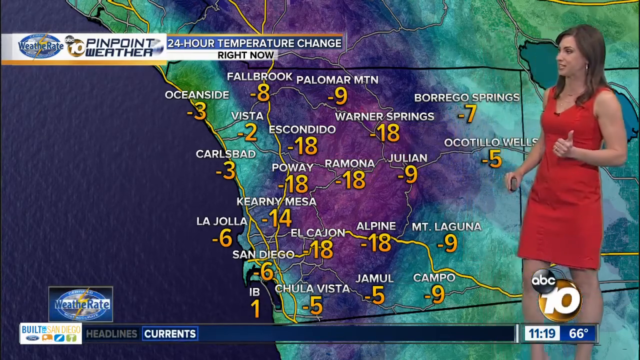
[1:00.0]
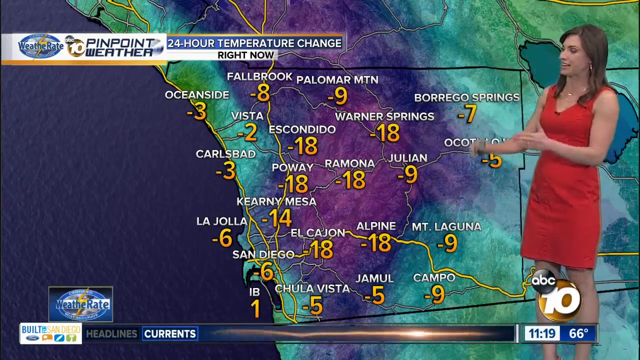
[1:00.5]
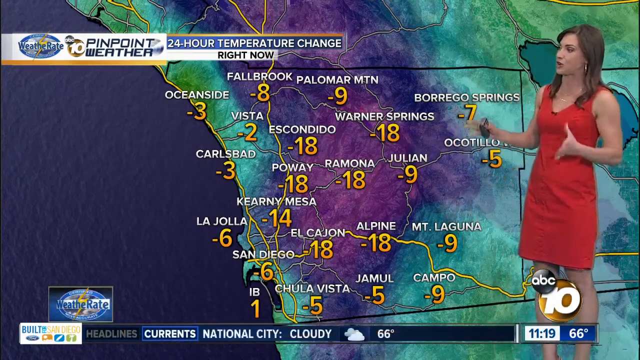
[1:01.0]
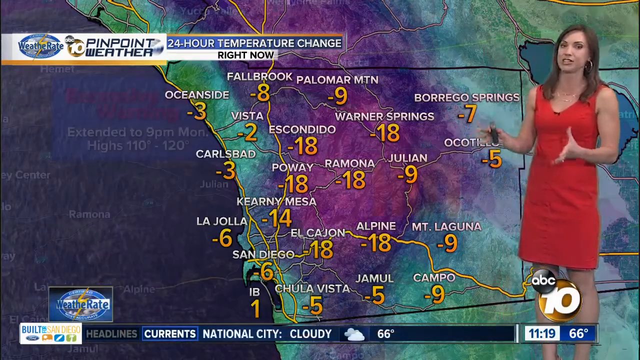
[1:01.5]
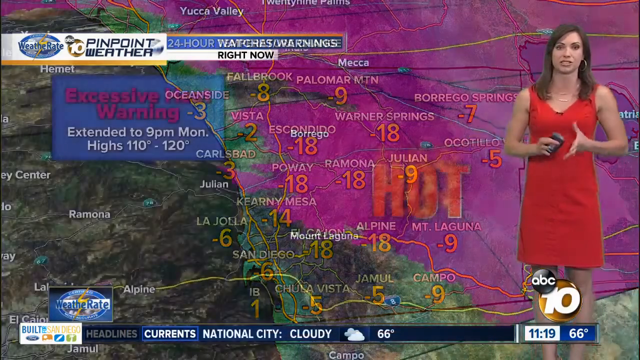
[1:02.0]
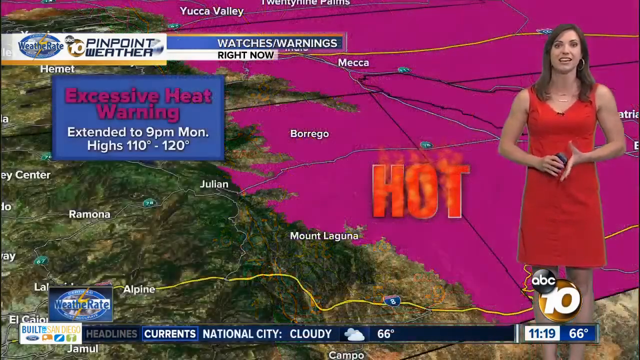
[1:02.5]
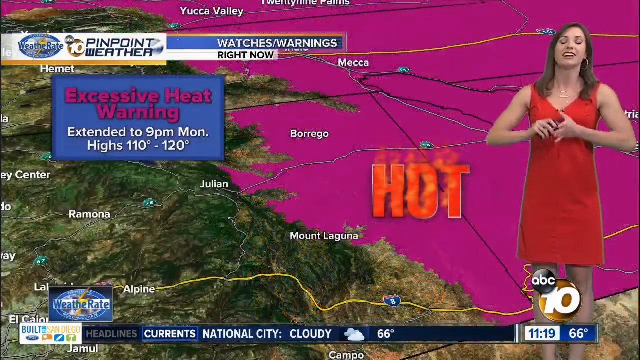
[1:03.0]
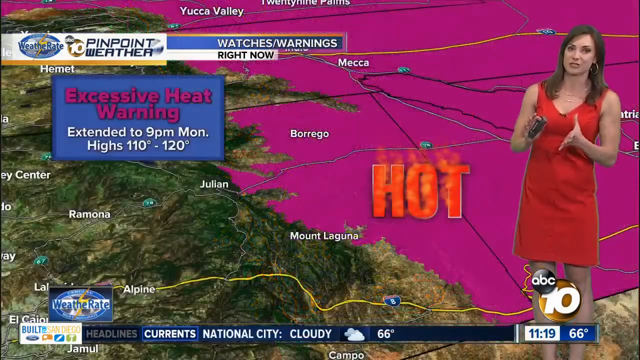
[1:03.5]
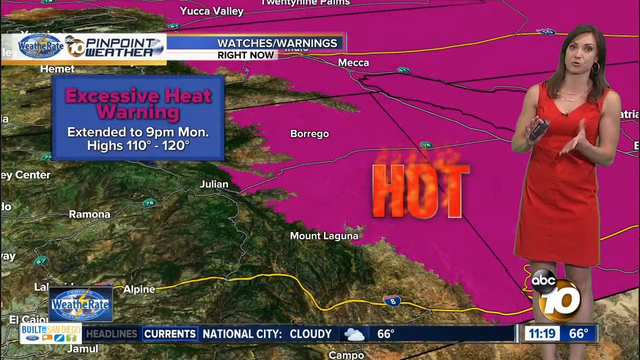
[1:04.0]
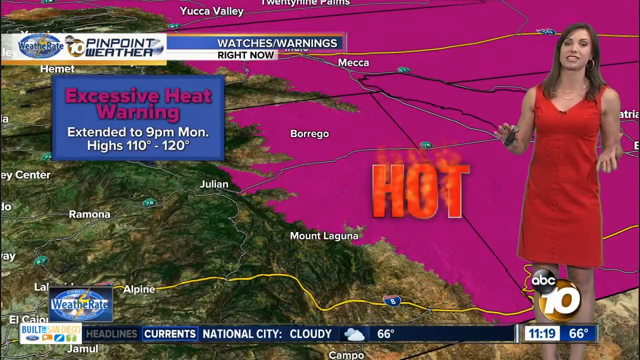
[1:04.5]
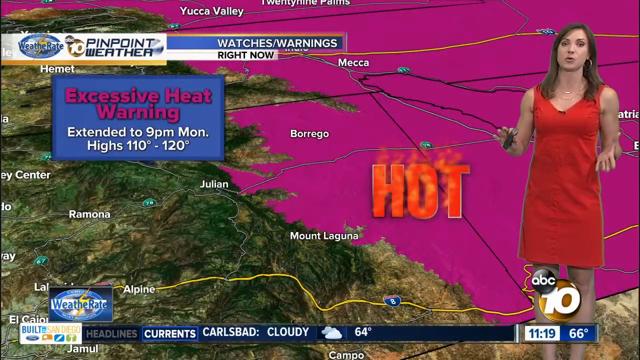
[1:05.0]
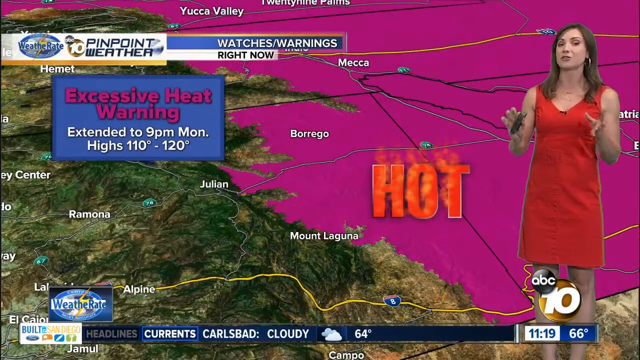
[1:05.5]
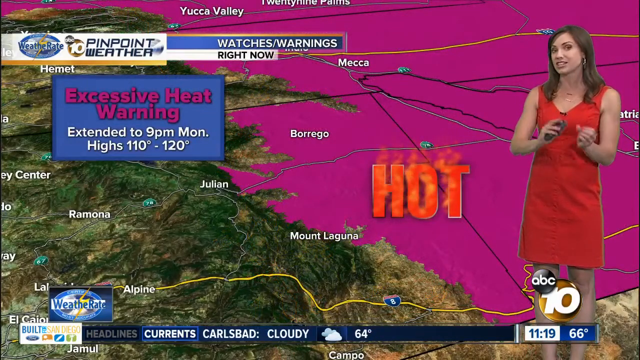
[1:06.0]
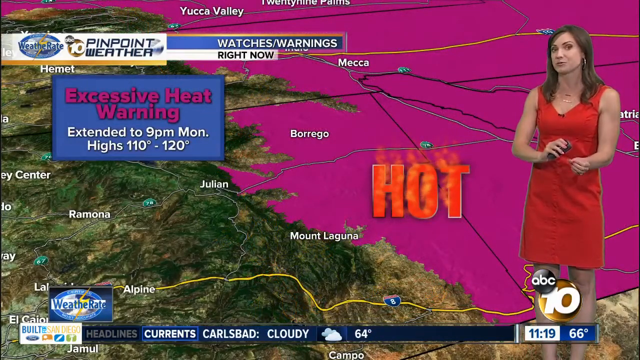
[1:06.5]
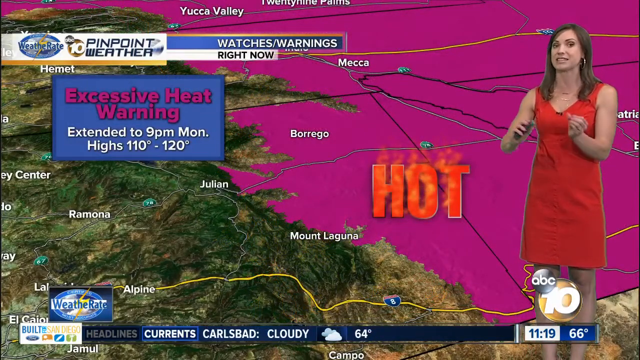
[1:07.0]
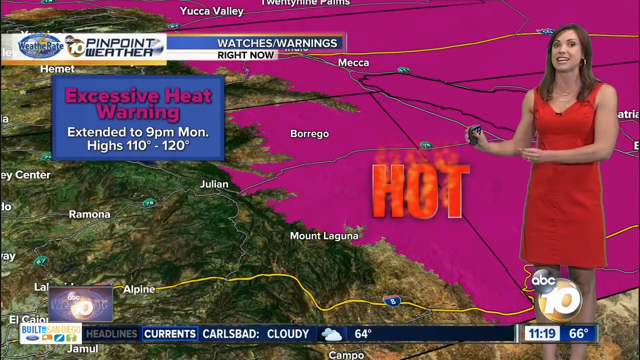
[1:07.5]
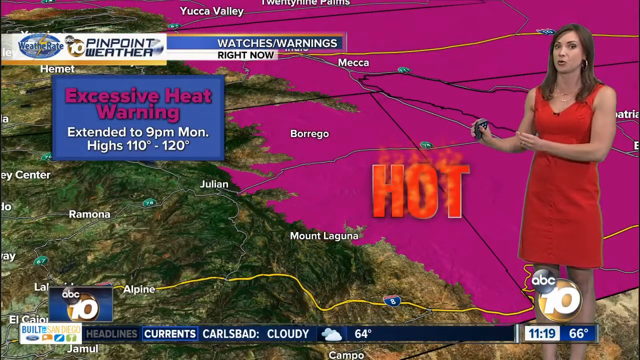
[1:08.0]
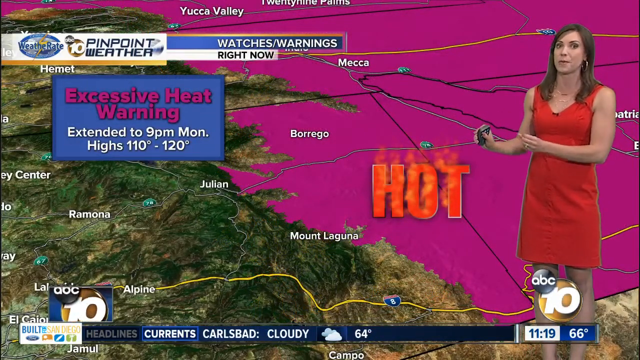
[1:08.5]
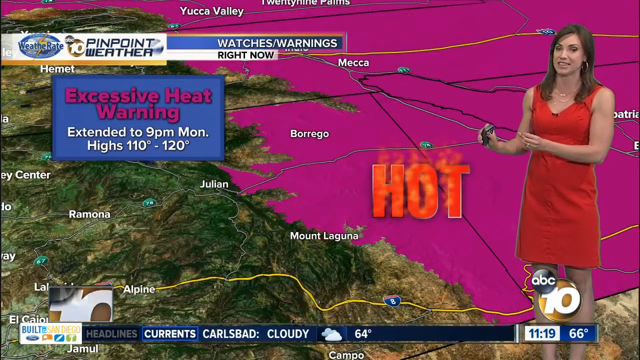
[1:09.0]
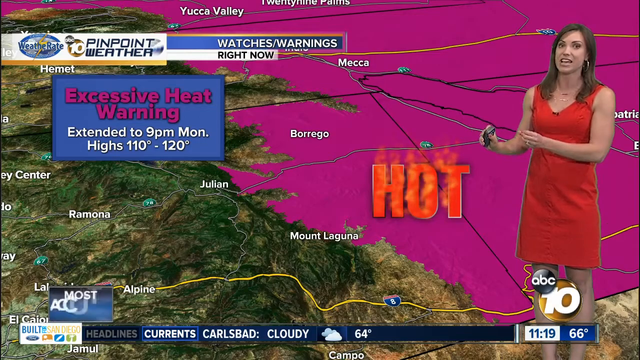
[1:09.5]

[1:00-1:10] A map shows an "excessive heat warning extended to 9 p.m Monday" with highs of 110 to 120 degrees. The presenter also shows a 24-hour temperature change right now. Cities listed include Mount Laguna, Borrego and Julian.